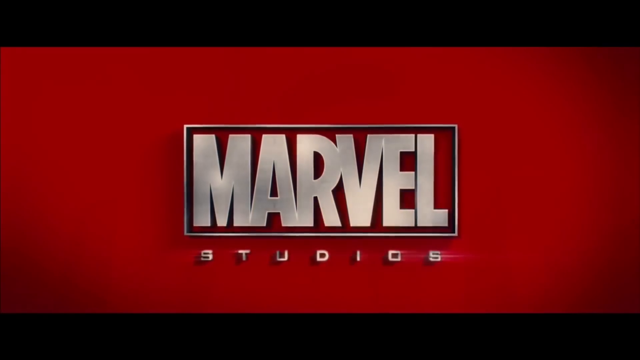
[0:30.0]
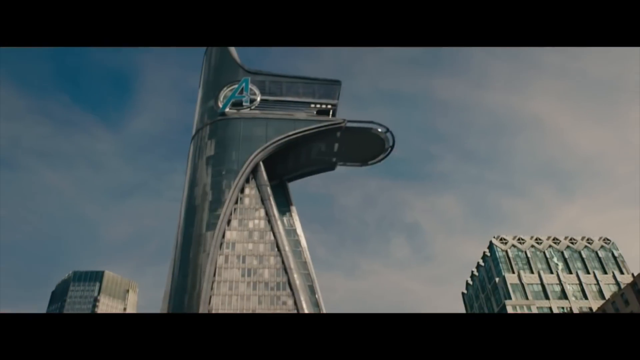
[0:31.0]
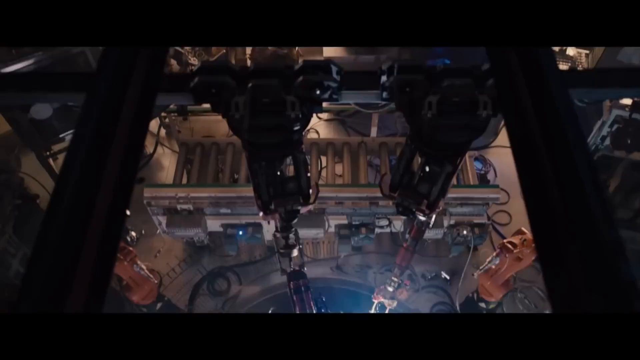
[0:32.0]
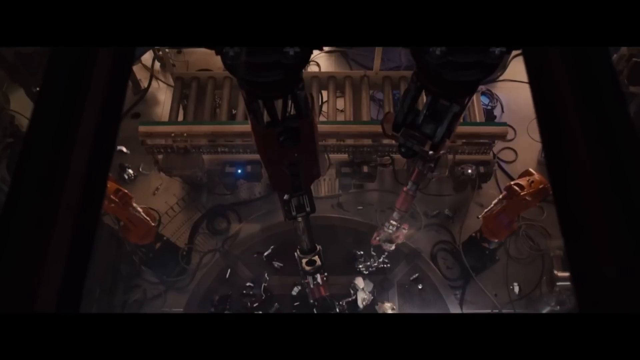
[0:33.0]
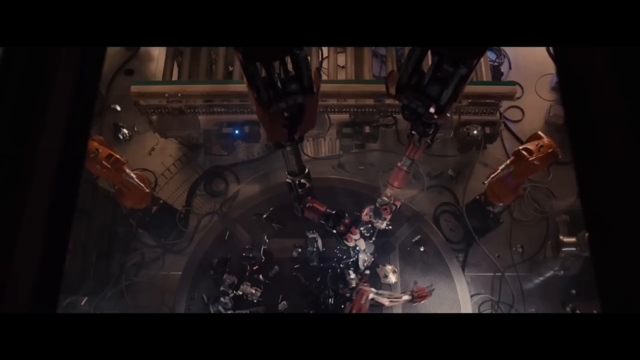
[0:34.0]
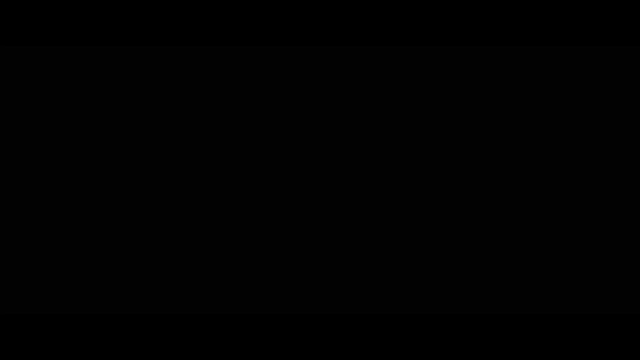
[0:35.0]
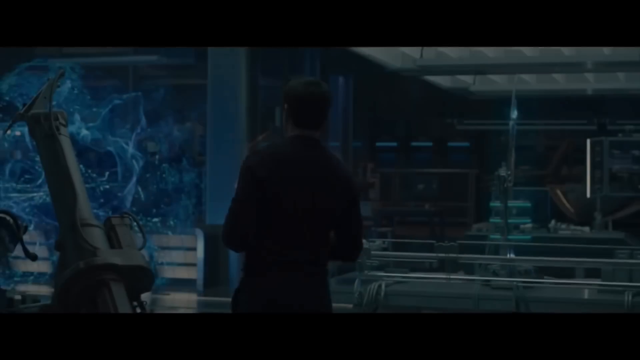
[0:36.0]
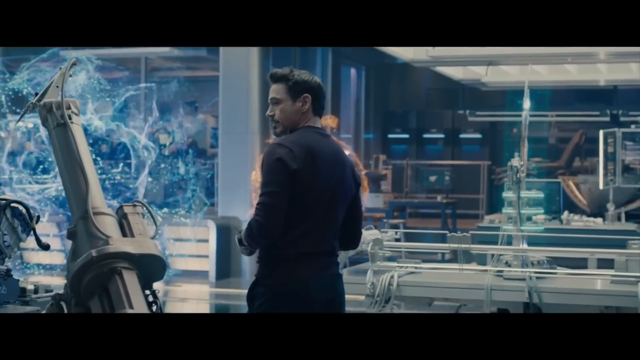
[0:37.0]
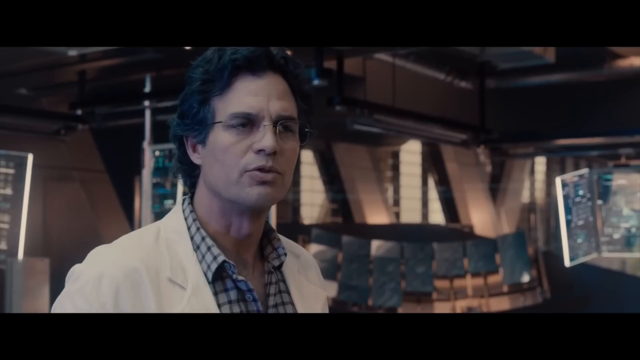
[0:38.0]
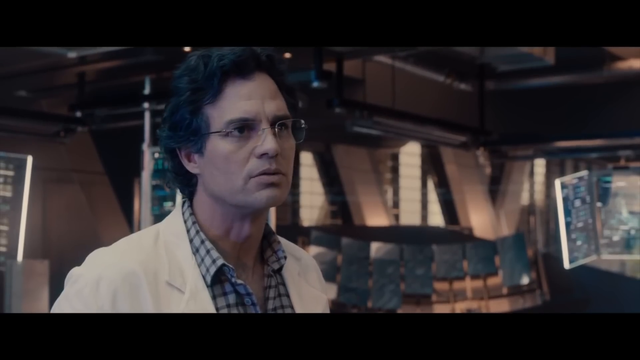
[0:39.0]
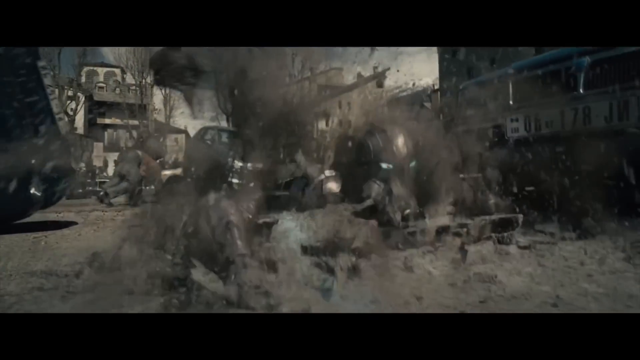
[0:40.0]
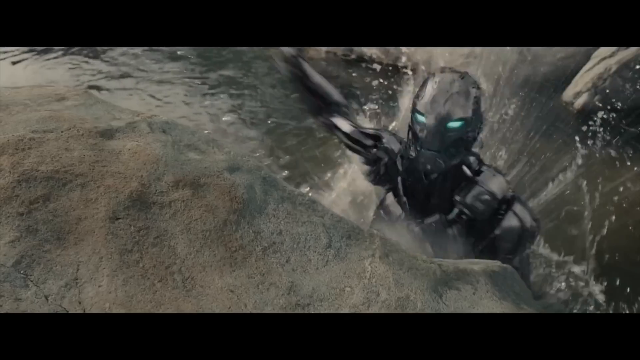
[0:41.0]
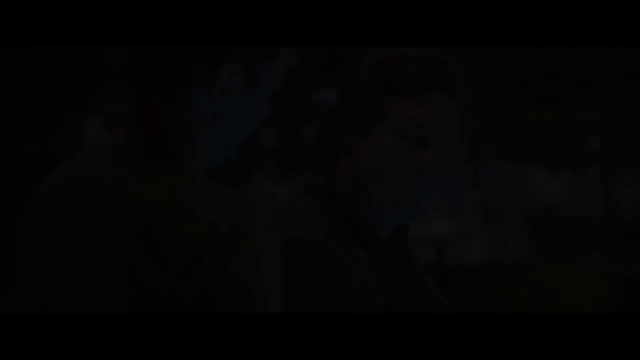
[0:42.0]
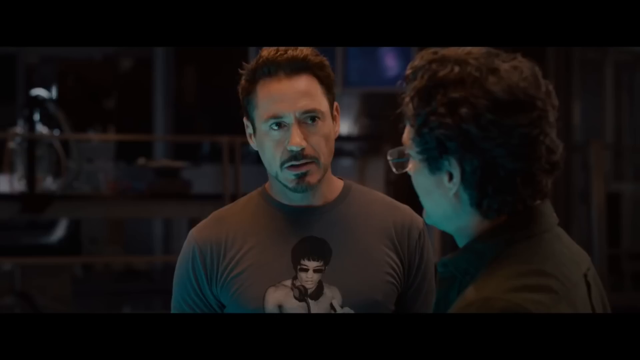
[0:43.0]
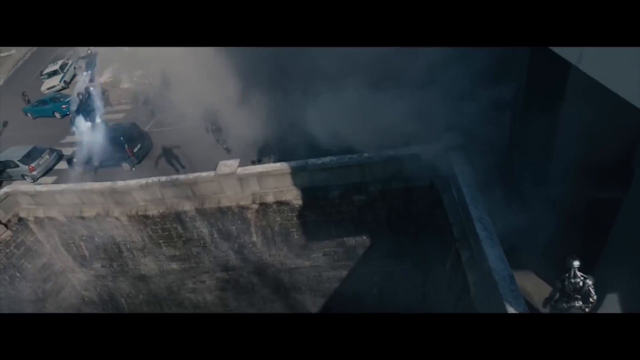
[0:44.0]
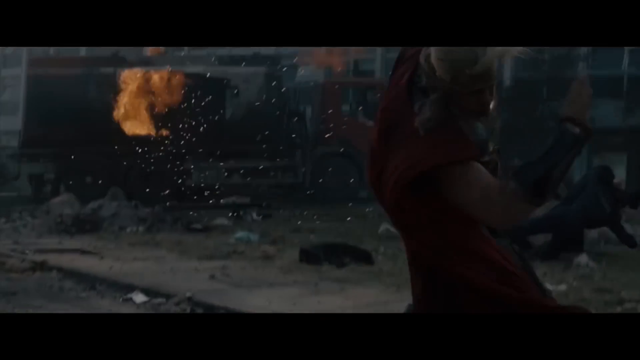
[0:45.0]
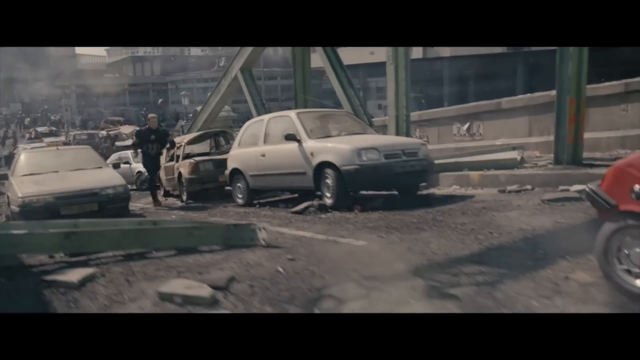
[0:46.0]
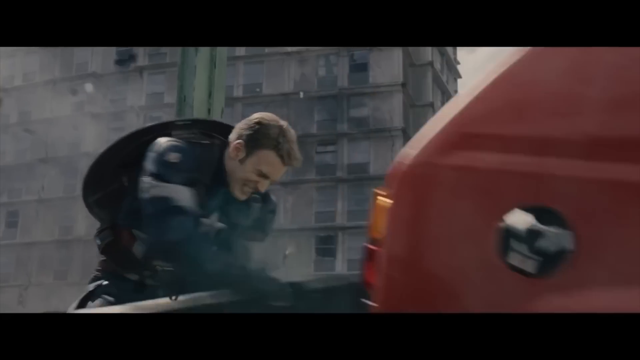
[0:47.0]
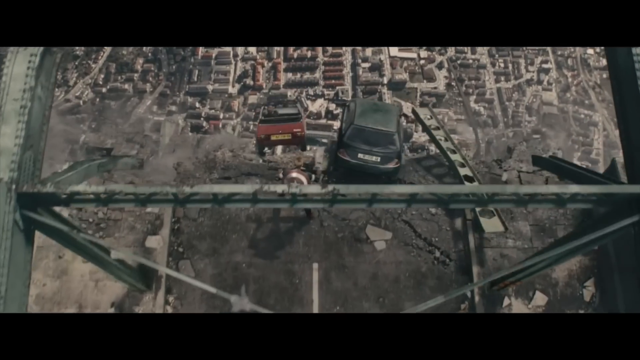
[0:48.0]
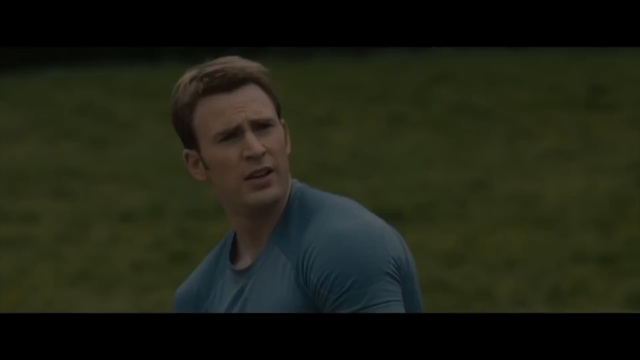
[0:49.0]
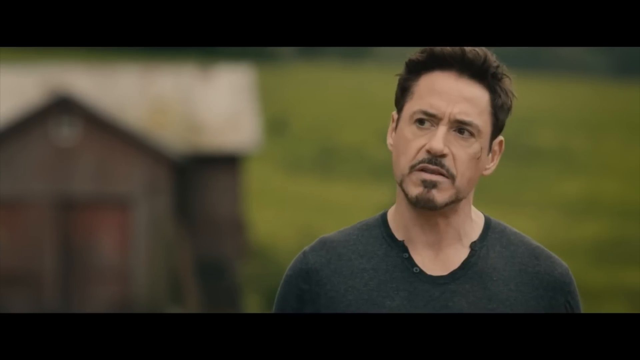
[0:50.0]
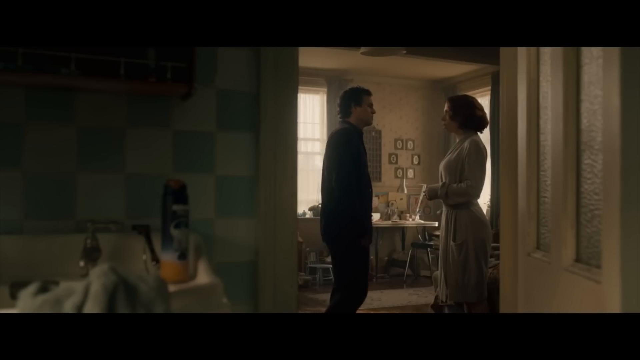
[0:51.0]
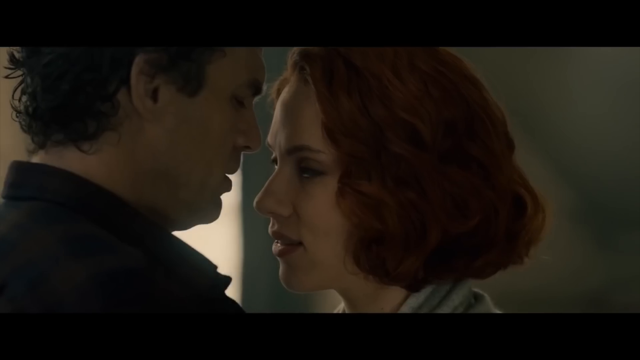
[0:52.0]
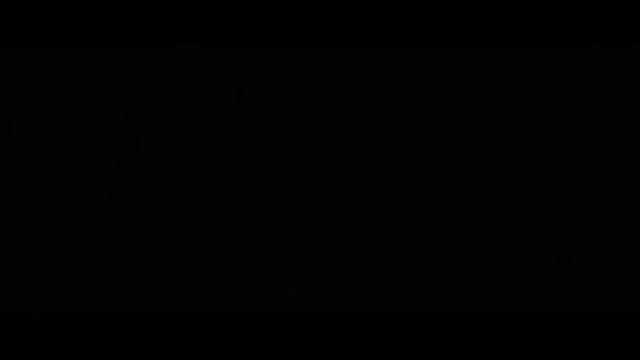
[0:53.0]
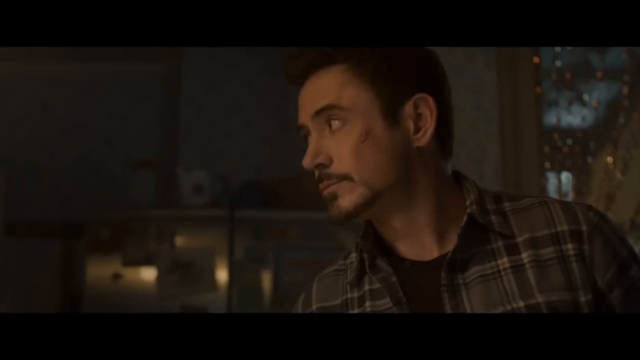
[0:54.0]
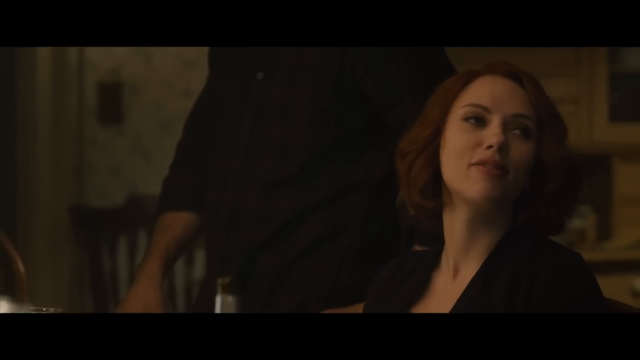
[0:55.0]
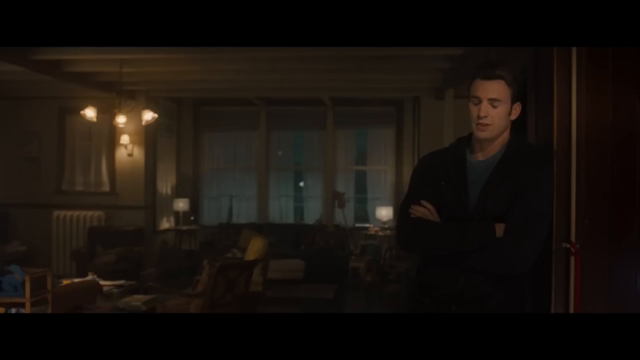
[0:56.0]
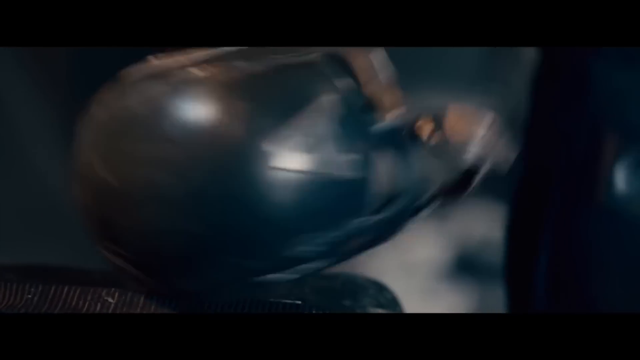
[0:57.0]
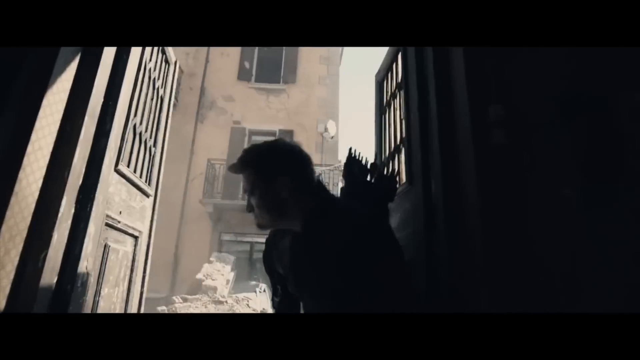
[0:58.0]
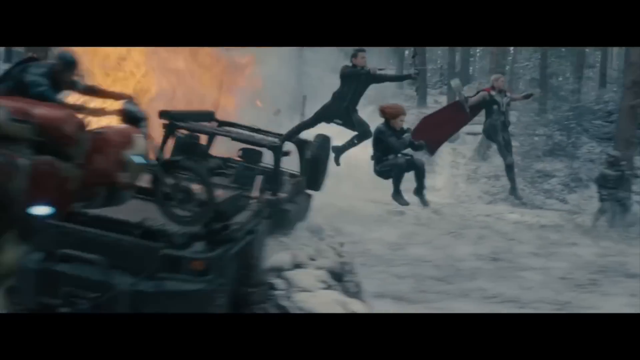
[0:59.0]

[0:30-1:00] The Marvel Studios intro plays: a red background with the Marvel logo and "studios" below it. The Avengers Tower is seen from below as the camera pans up to it. What looks to be AI robots craft and mix robots. Iron Man and Hulk discuss something in what looks to be Iron Man's lab. What looks to be the same cyborg-type machines come from the ground and break into the streets. Iron Man appears with a dog in the back, followed by Captain America. A bridge is torn in the middle. Iron Man appears, then a sky bridge, then Captain America, and then both of them look like they are attacking an enemy.